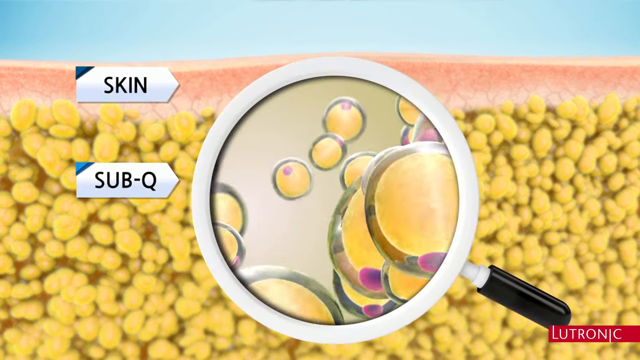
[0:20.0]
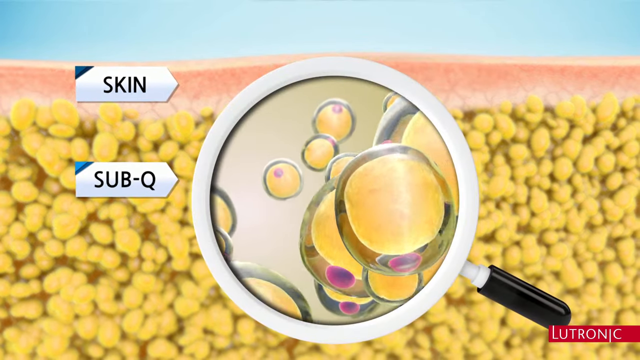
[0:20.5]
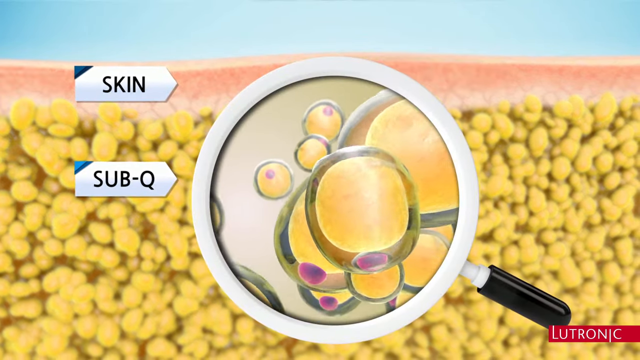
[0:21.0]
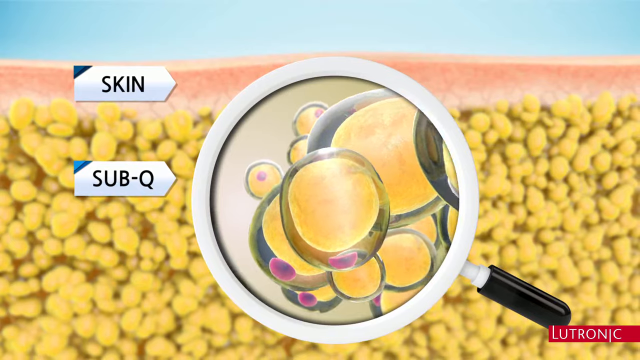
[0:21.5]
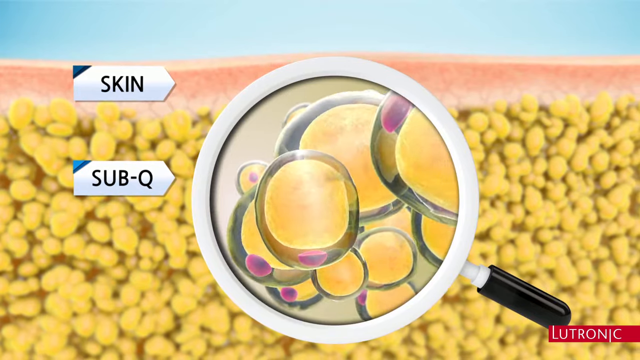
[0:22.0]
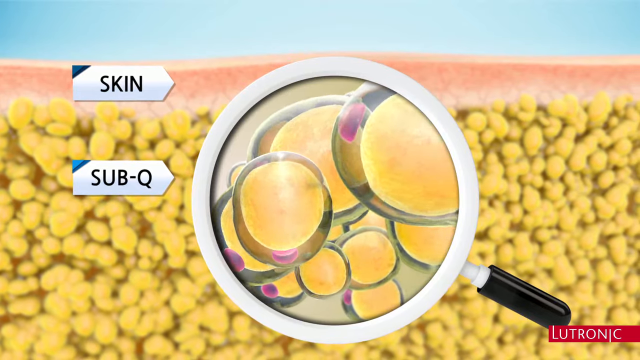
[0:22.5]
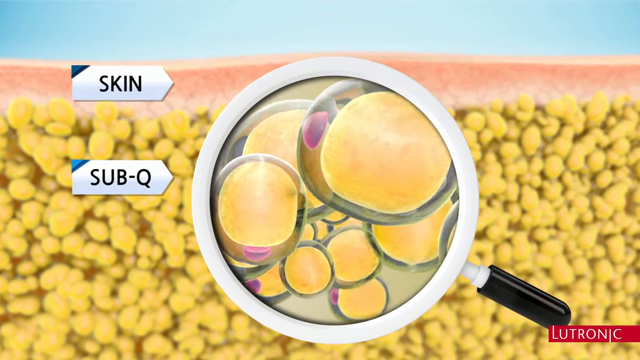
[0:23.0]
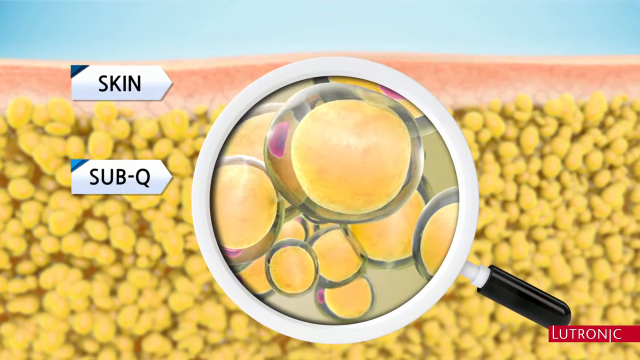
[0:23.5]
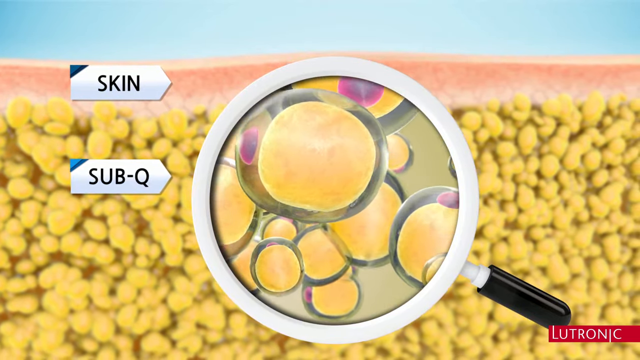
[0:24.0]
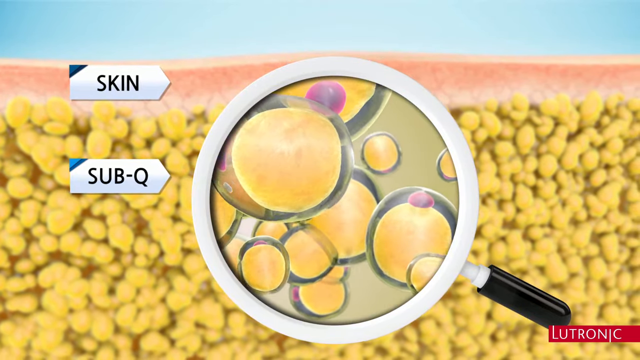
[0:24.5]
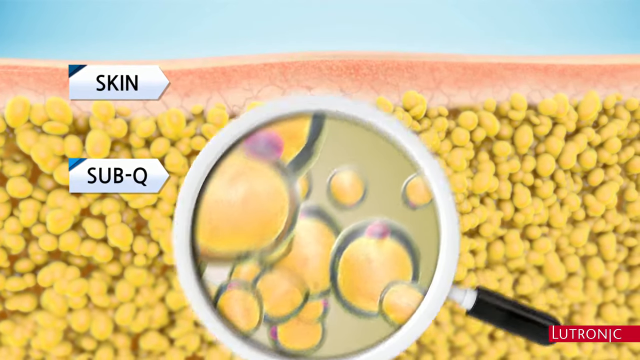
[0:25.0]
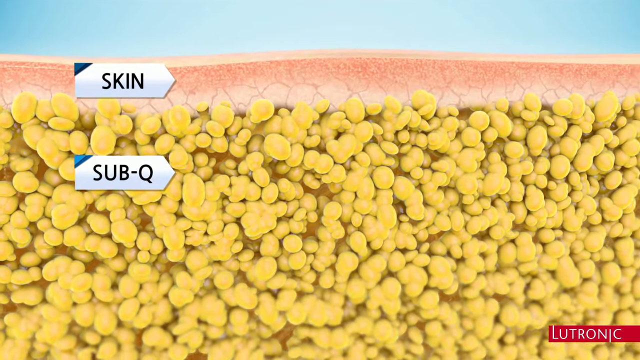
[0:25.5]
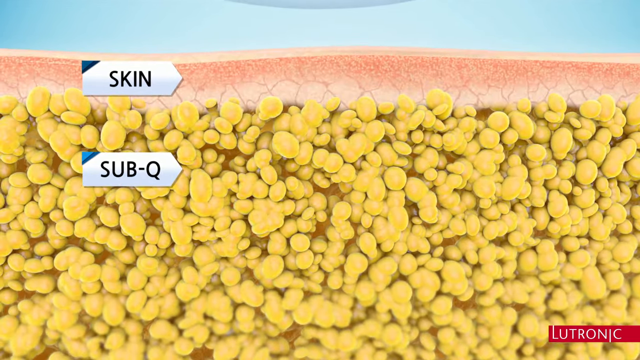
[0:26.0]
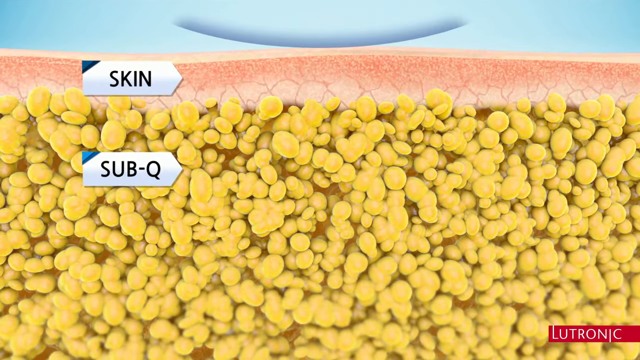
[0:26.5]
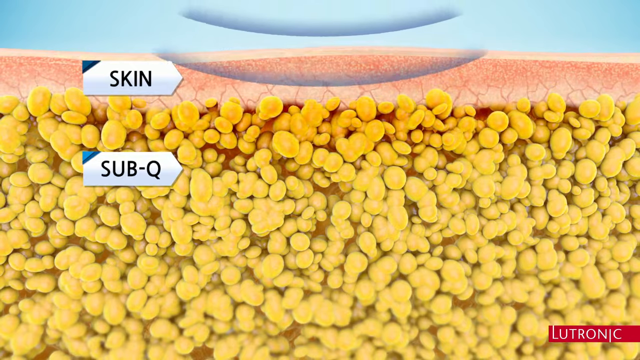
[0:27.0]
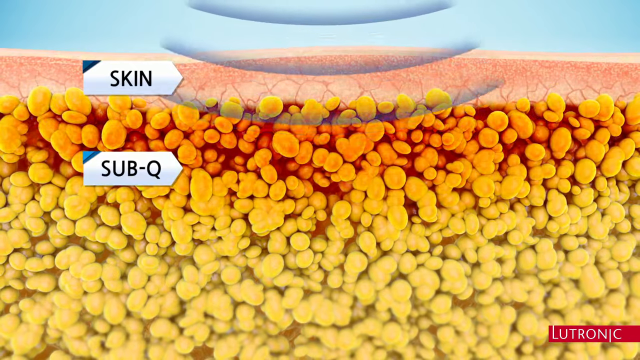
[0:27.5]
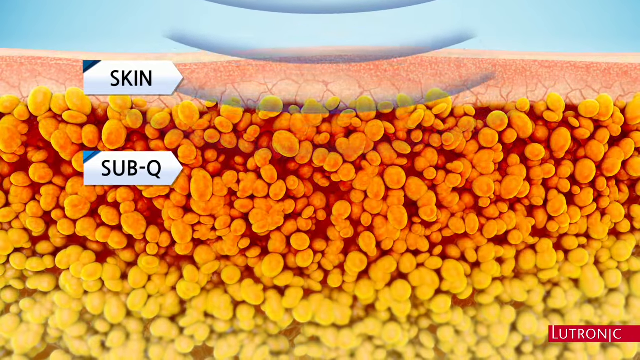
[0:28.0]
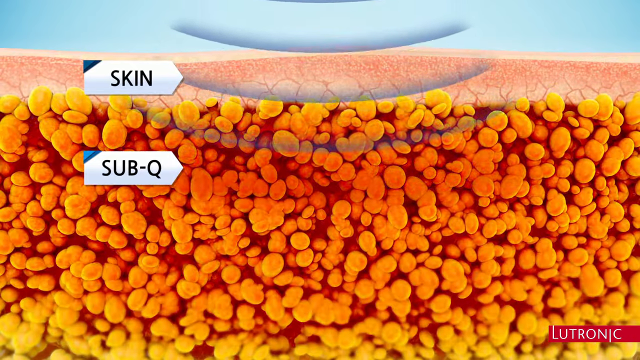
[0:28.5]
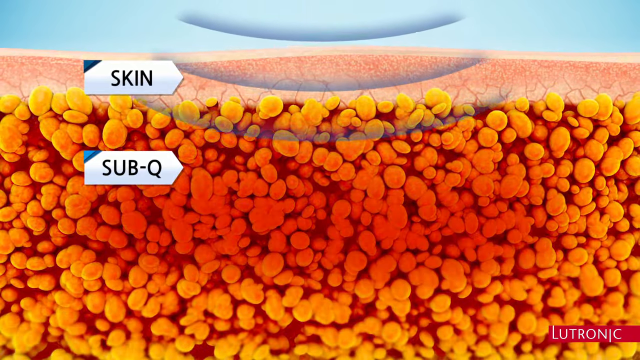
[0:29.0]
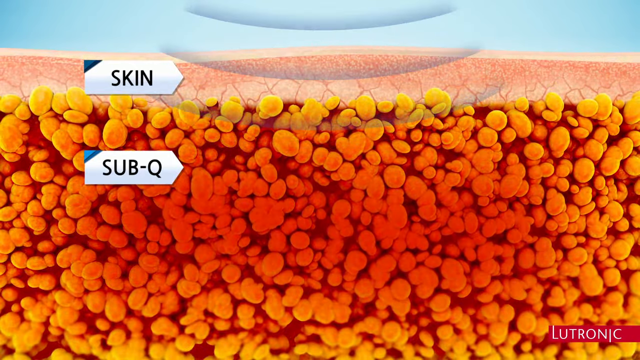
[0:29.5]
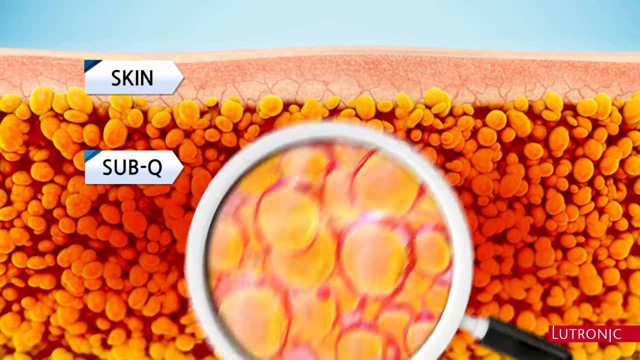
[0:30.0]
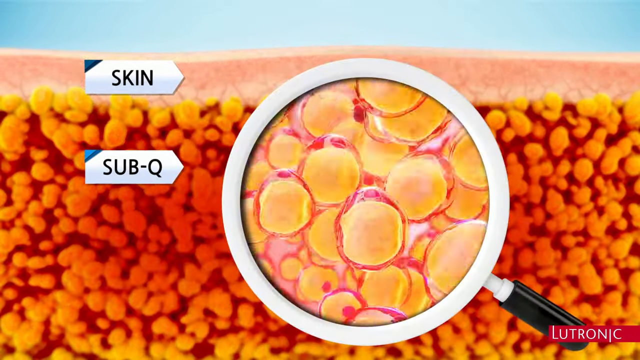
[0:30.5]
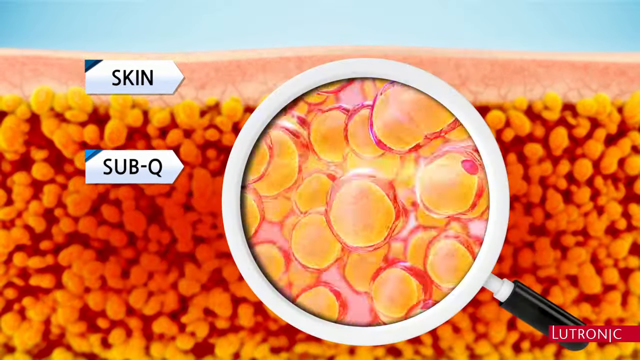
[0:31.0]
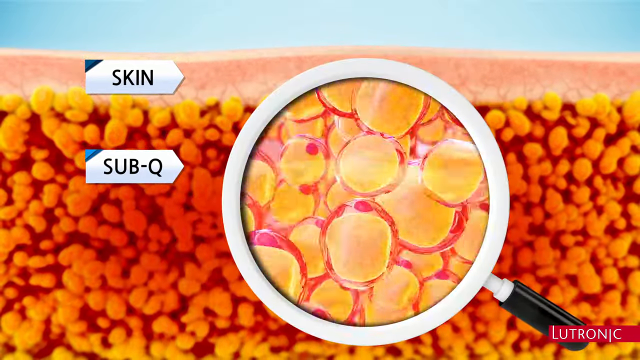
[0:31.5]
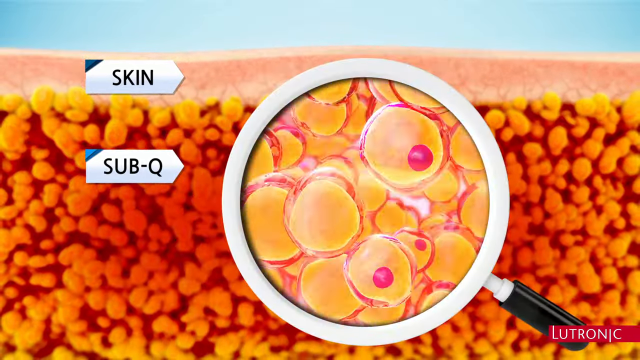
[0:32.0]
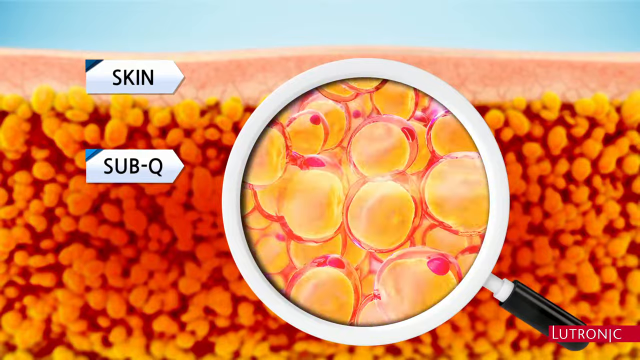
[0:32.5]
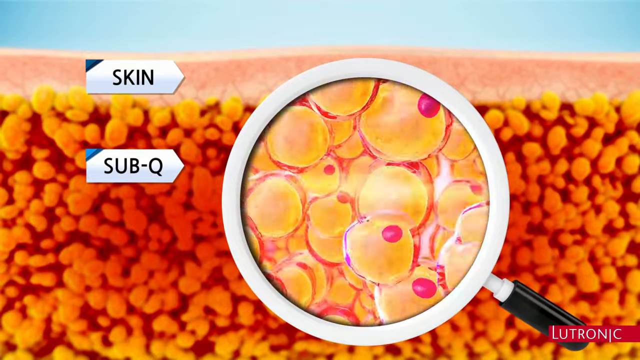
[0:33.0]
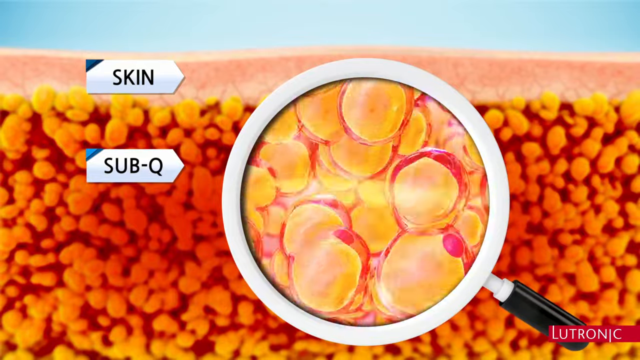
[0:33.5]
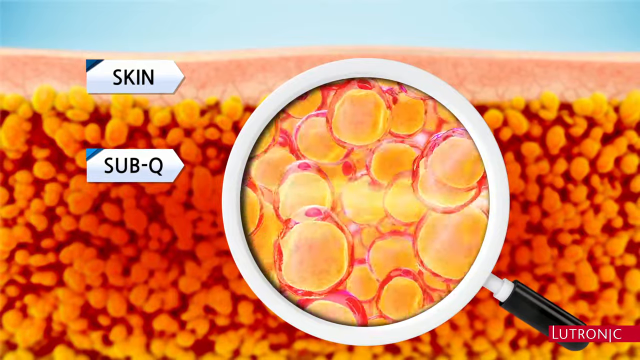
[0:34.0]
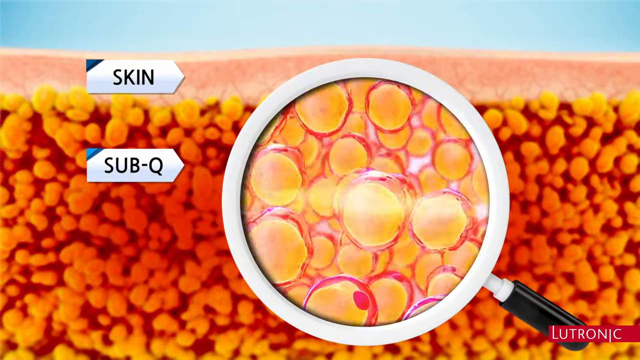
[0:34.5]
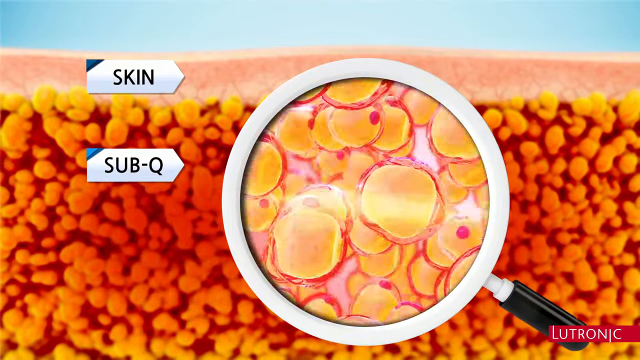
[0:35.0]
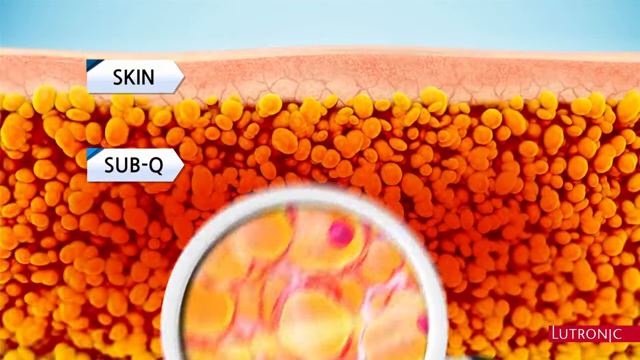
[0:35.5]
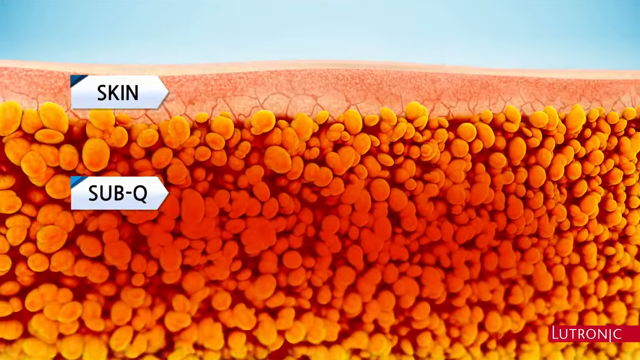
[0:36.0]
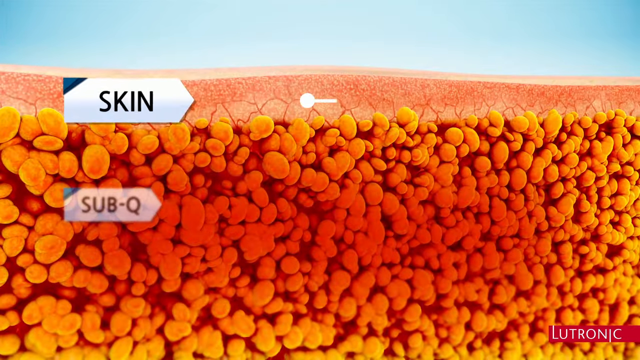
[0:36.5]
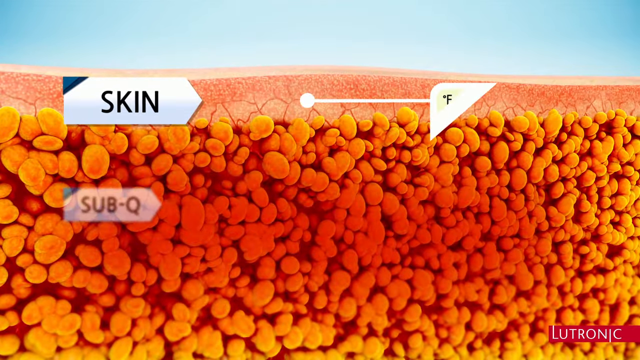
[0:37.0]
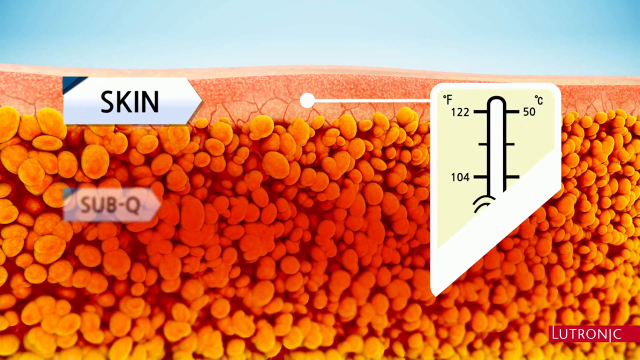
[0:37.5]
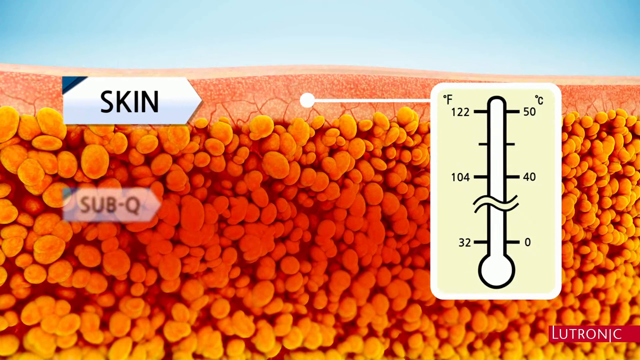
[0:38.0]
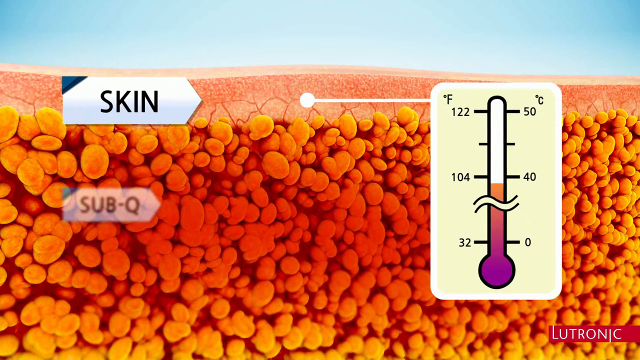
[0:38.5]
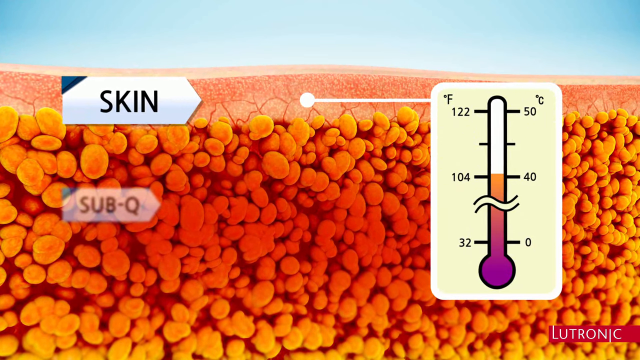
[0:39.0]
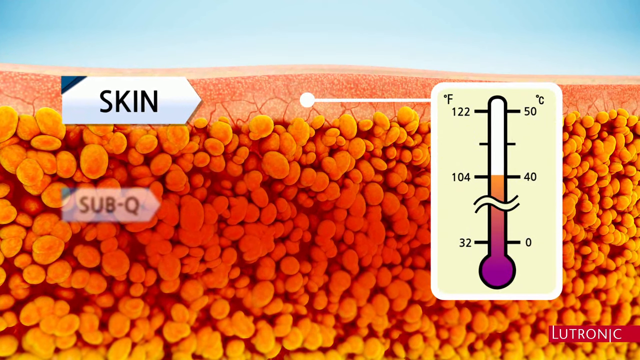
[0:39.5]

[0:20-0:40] The slide with the diagram of the skin and the sub-Q fat is shown. The view pans in on the temperature shown in the sub-Q fat portion, focusing on the over 100 degrees Fahrenheit reading, around 104 degrees Fahrenheit. The name Lutronic also appears, seemingly connected with the diagrams.